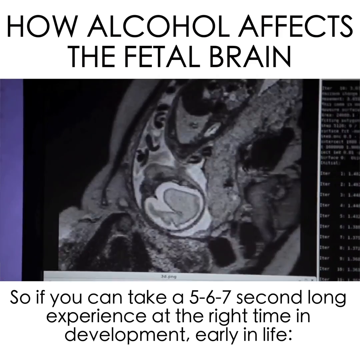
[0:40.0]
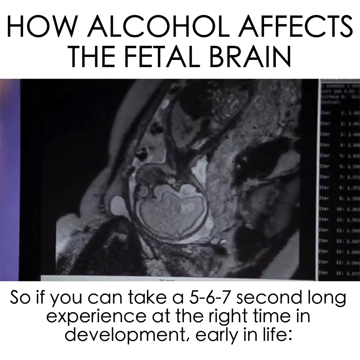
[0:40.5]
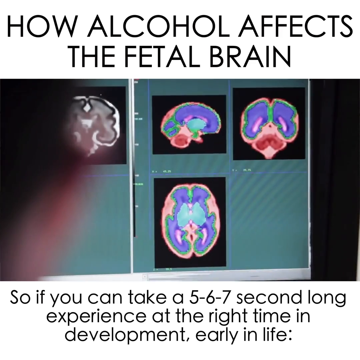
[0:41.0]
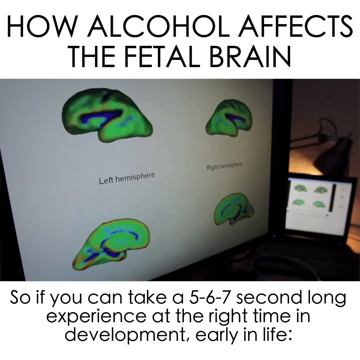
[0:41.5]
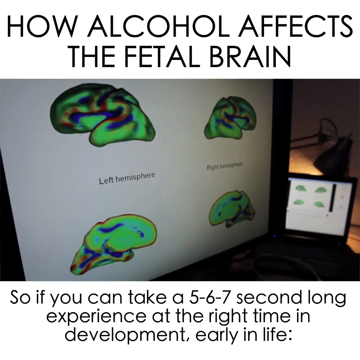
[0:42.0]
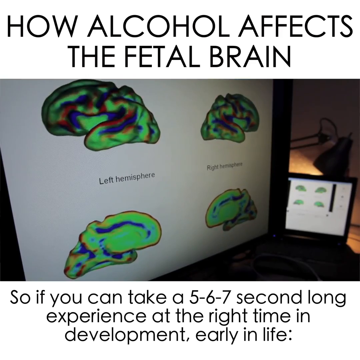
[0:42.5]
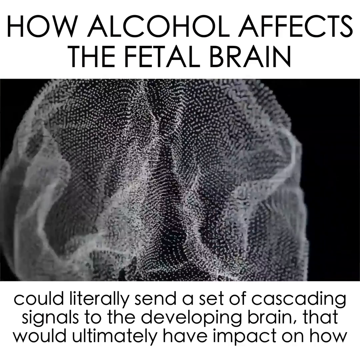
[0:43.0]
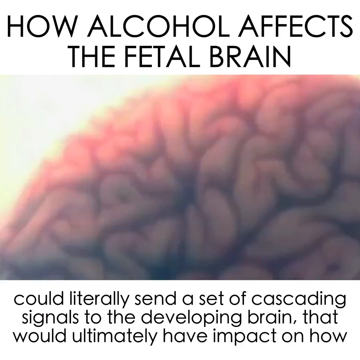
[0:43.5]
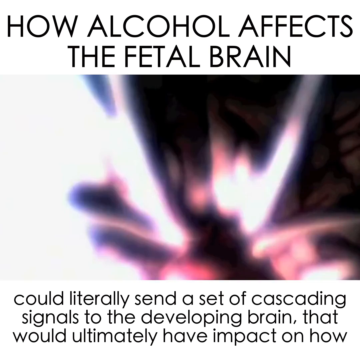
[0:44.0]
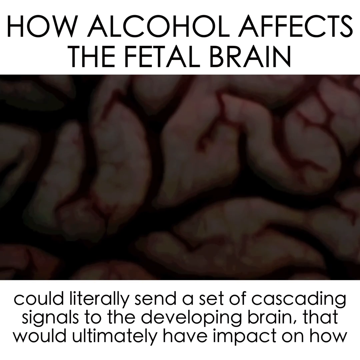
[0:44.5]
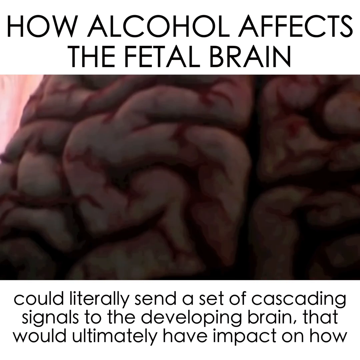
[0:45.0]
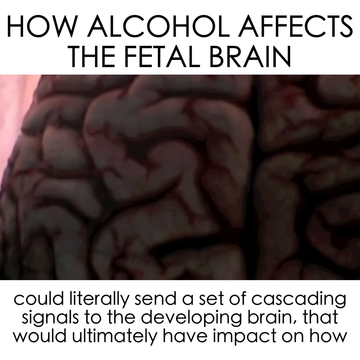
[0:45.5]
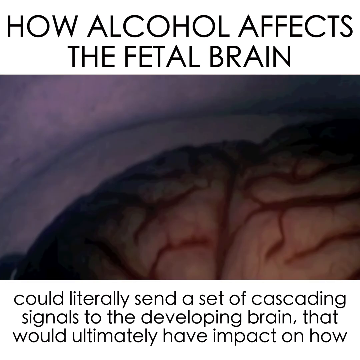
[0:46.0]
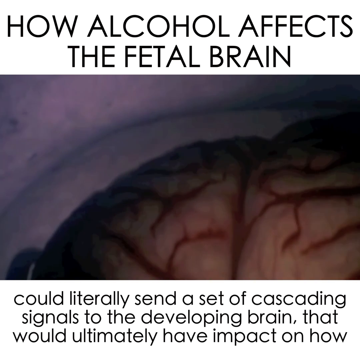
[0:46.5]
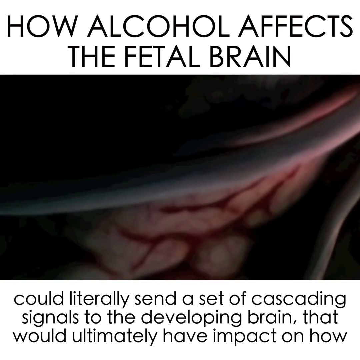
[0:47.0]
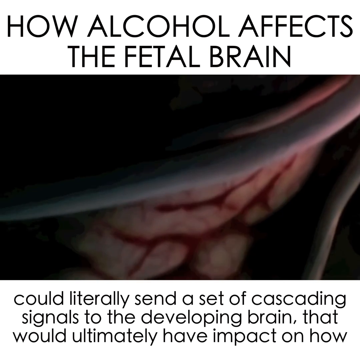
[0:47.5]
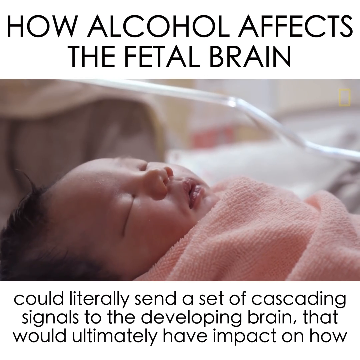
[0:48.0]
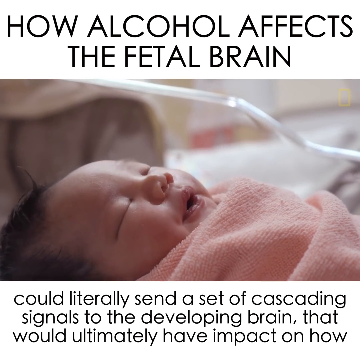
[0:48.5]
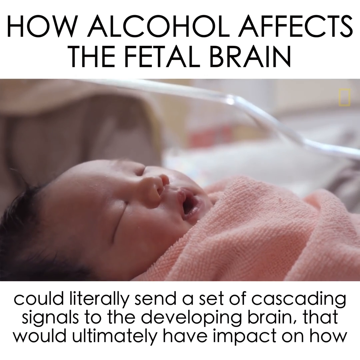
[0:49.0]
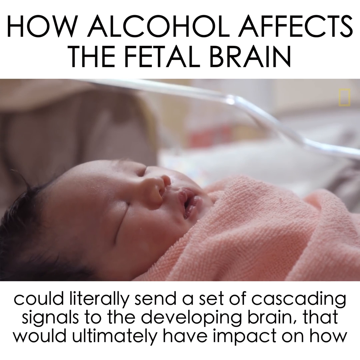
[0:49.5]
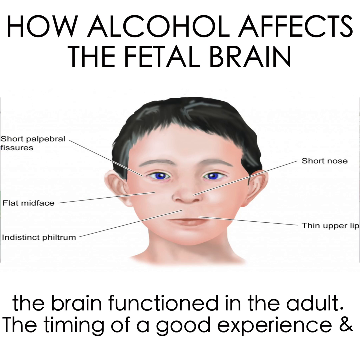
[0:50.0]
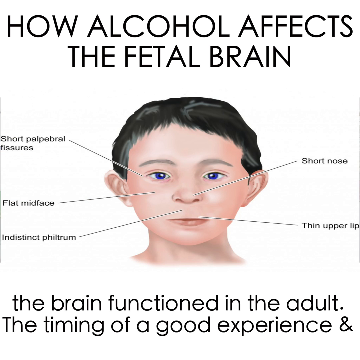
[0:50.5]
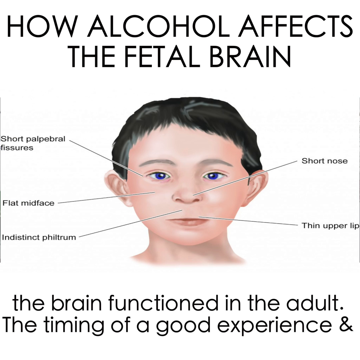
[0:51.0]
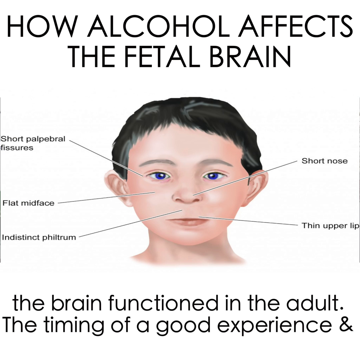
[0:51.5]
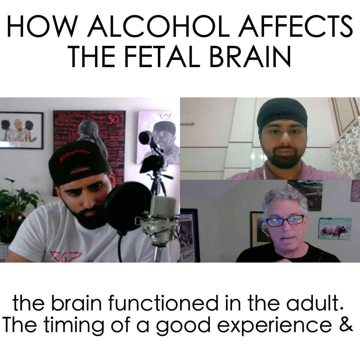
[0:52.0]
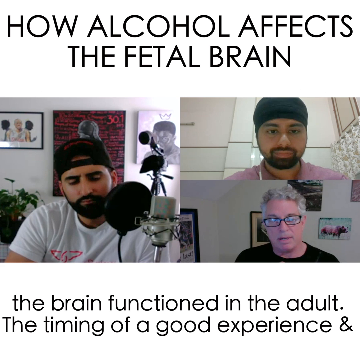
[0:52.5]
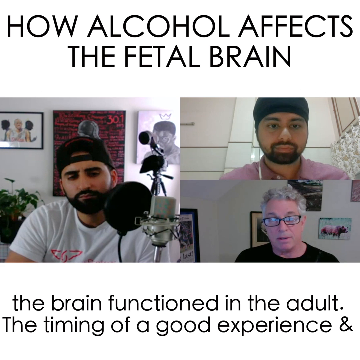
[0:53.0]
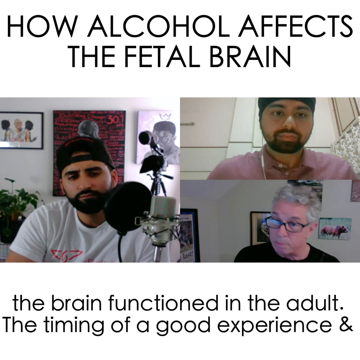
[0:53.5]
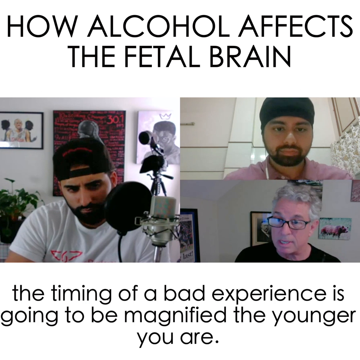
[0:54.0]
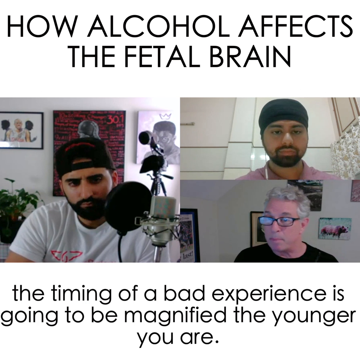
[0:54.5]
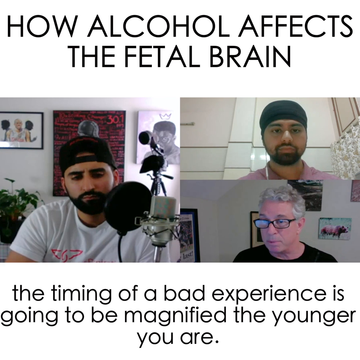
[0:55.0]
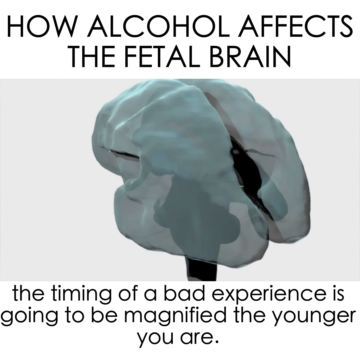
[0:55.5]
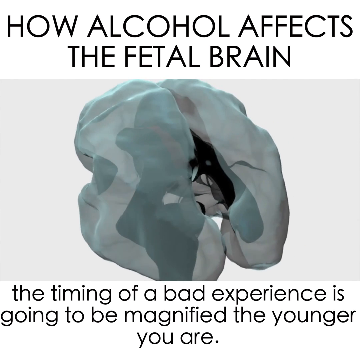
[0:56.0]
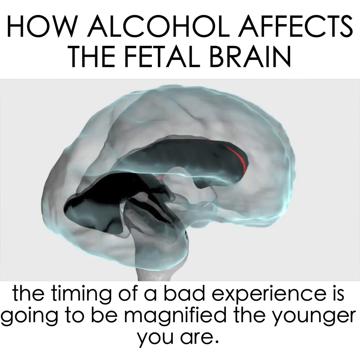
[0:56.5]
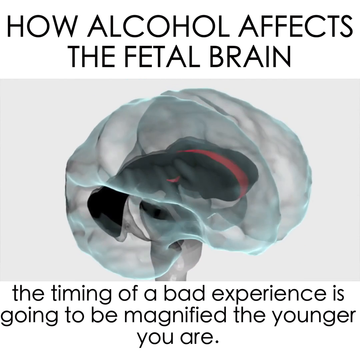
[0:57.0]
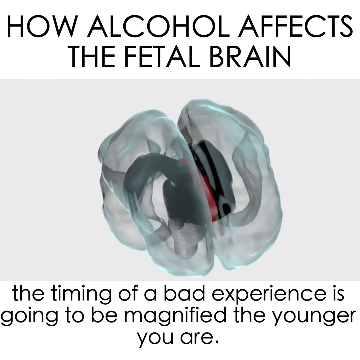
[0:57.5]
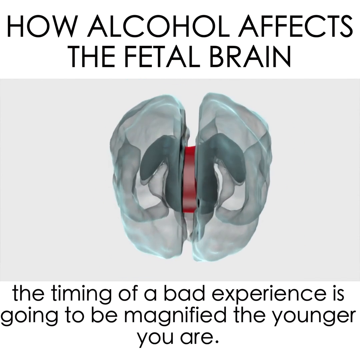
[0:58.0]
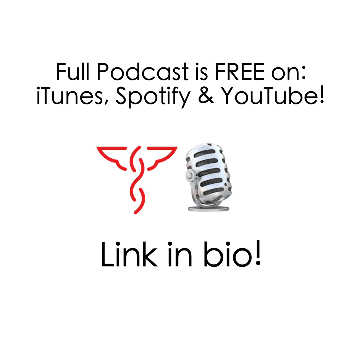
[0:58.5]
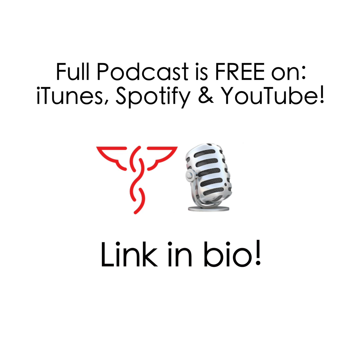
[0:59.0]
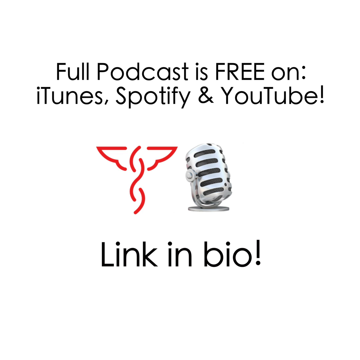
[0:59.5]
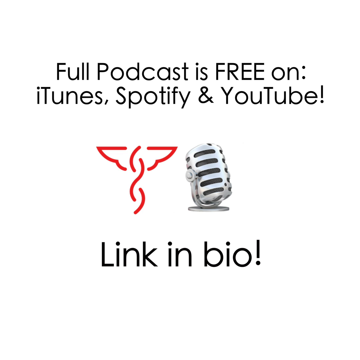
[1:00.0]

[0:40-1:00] Ultrasounds and other images of the baby's development appear, moving on to brain development, including some MRIs. At the bottom of the screen, black text against a white background reads, "could literally send a cascading signal to the developing brain that would ultimately have an impact on how," as more images of the brain and more x-ray images are shown. A baby is then seen after delivery in a hospital bassinet, wearing a pink blanket. More text appears, beginning "the brain functioned in the adult," followed by text about features of a child's face, including "short palpabral fissures around the eyes," "flat mid-face," "short nose," and "thin upper lip." The video concludes with more x-ray images of the brain, and finally a link to Bold's podcast, with text reading "it's free on iTunes, Spotify, and YouTube."